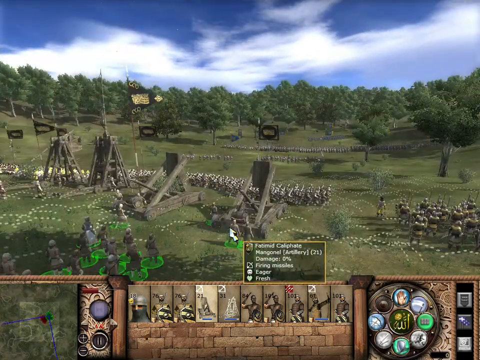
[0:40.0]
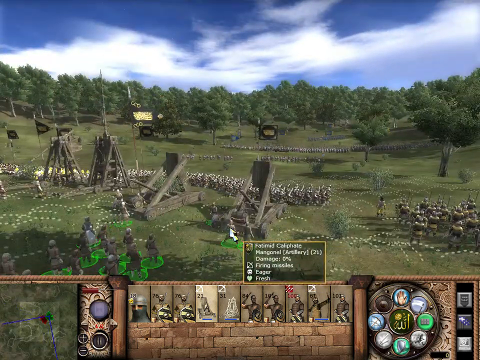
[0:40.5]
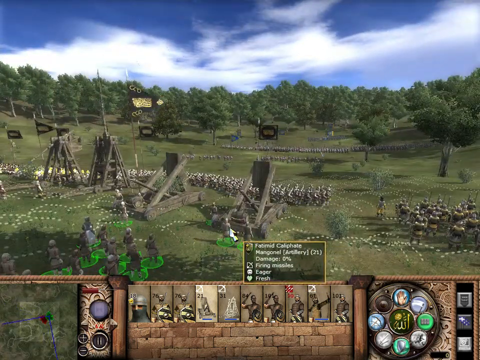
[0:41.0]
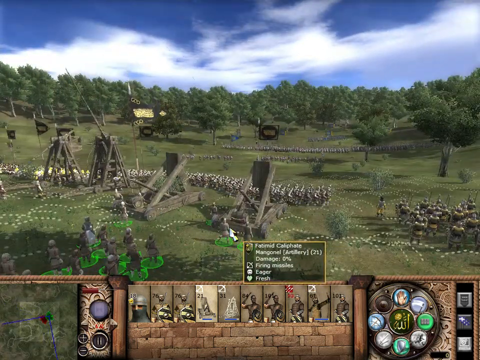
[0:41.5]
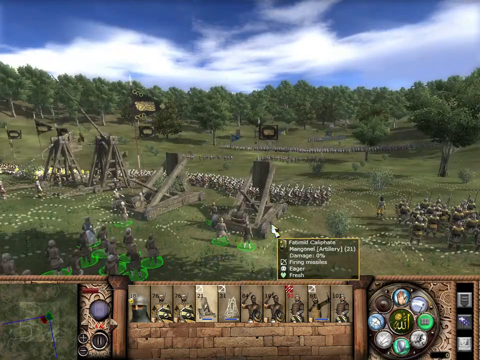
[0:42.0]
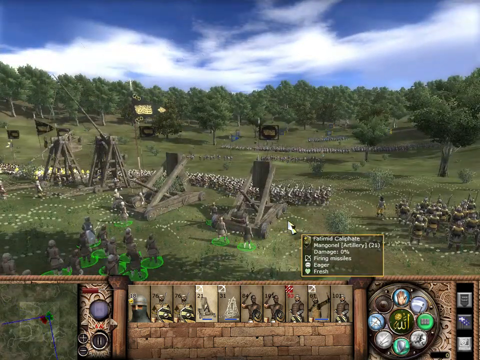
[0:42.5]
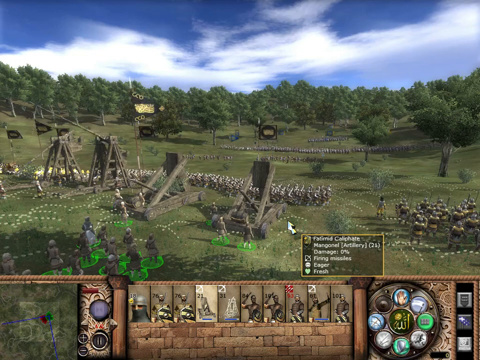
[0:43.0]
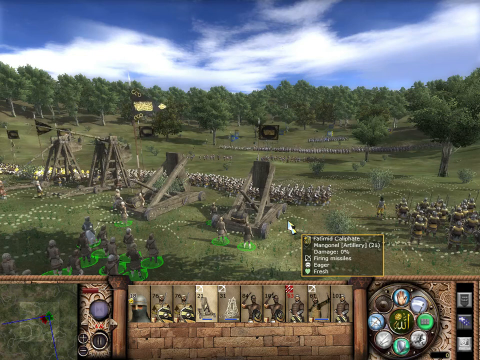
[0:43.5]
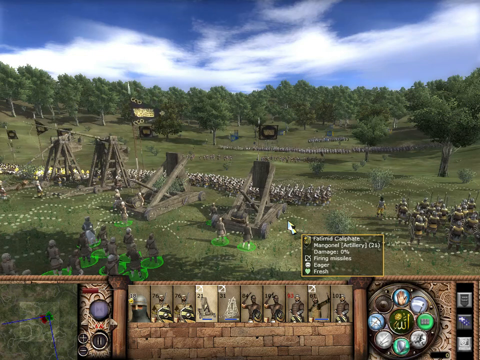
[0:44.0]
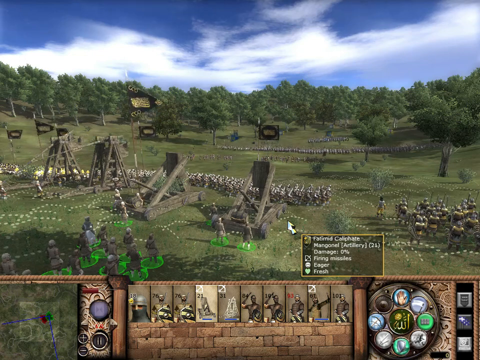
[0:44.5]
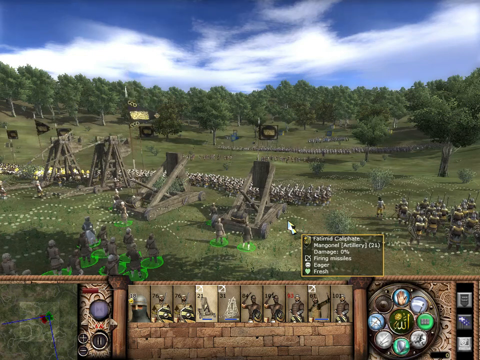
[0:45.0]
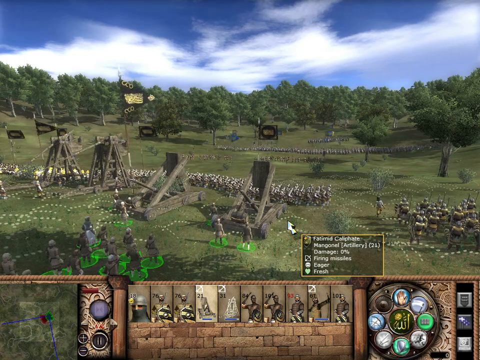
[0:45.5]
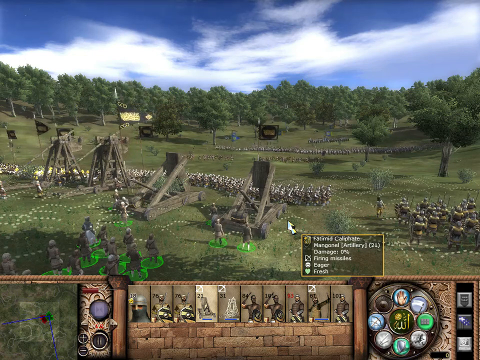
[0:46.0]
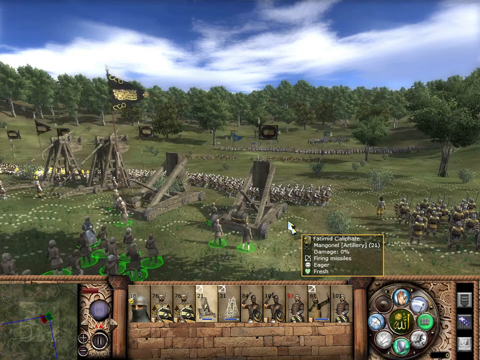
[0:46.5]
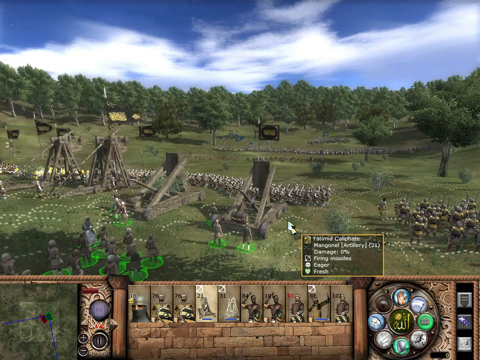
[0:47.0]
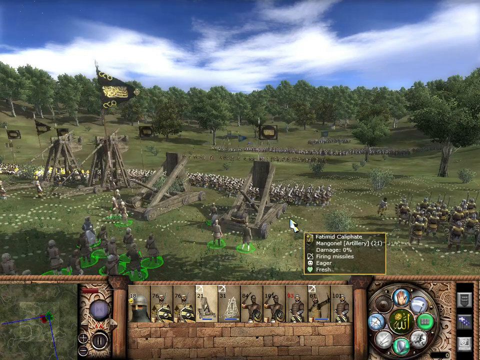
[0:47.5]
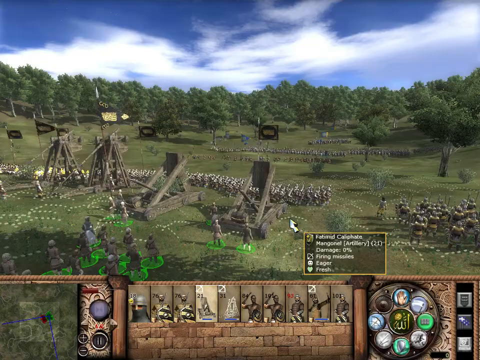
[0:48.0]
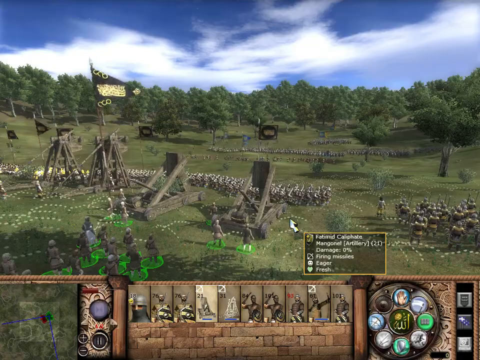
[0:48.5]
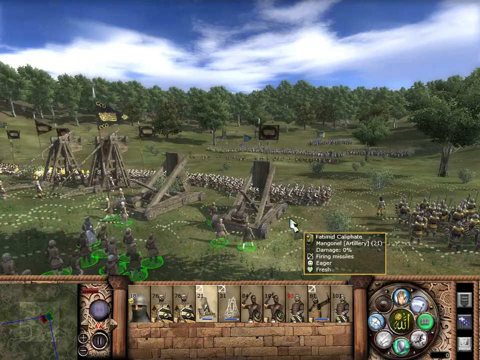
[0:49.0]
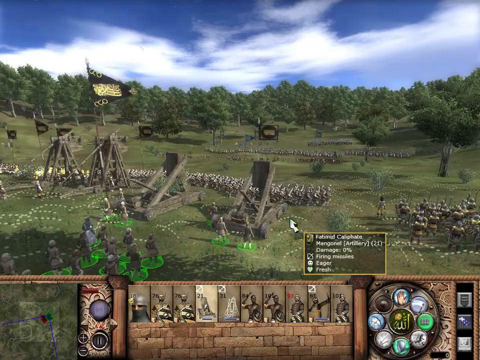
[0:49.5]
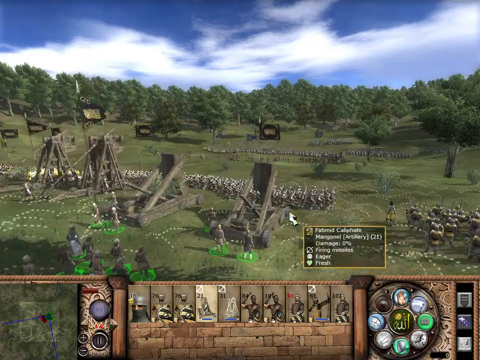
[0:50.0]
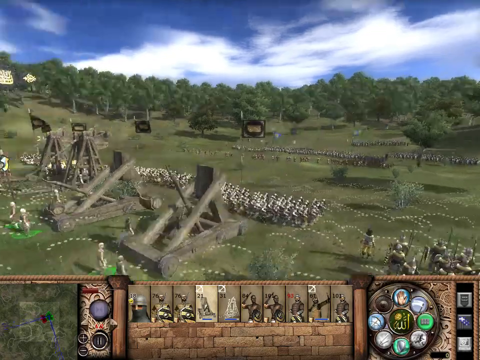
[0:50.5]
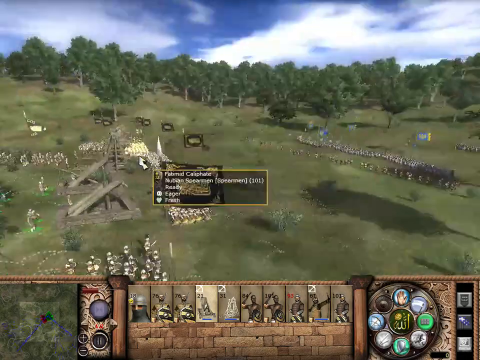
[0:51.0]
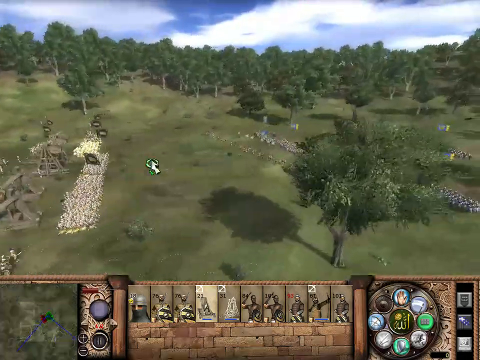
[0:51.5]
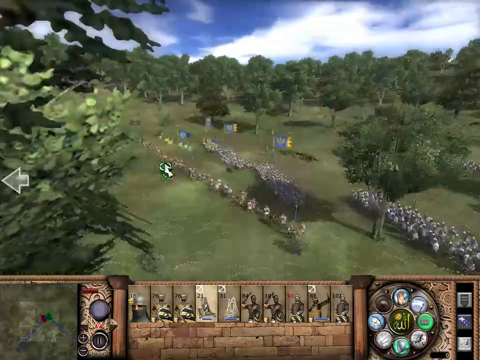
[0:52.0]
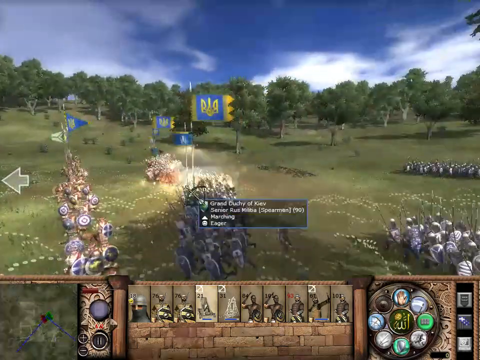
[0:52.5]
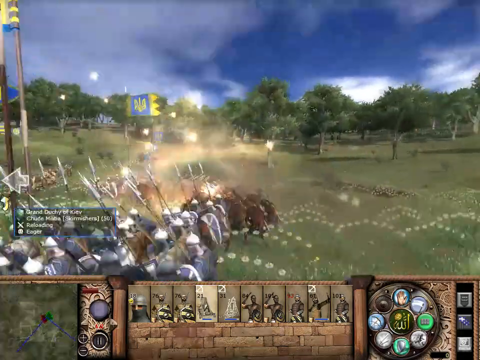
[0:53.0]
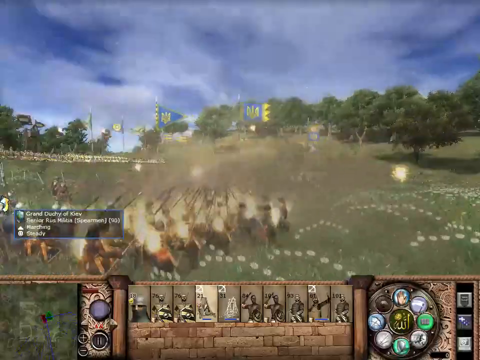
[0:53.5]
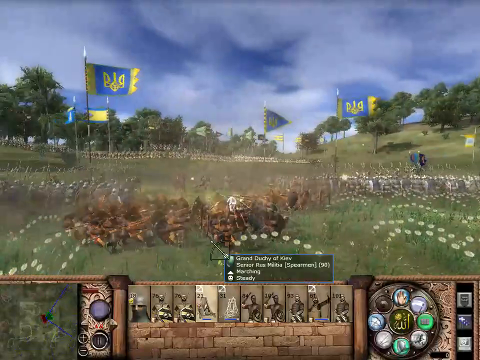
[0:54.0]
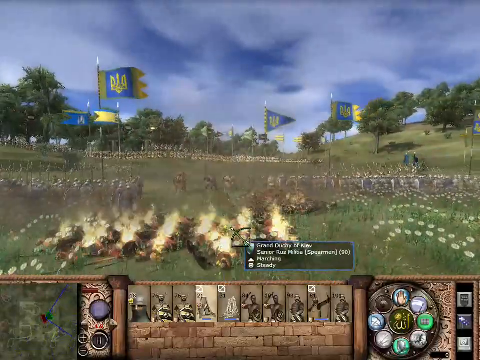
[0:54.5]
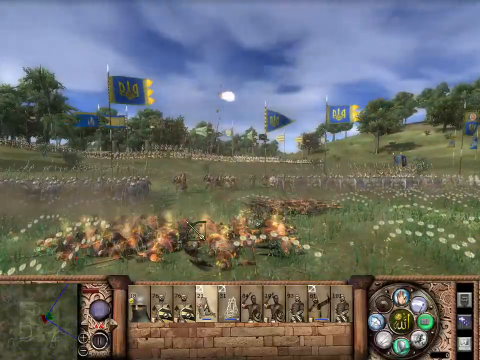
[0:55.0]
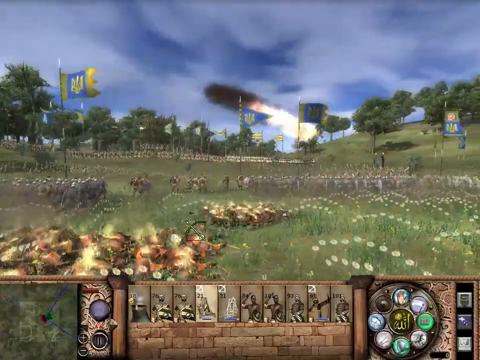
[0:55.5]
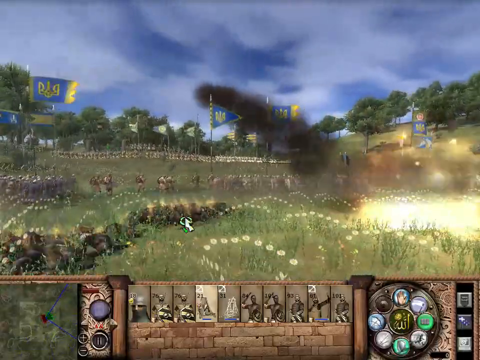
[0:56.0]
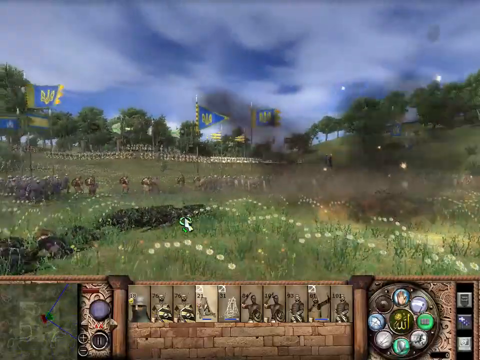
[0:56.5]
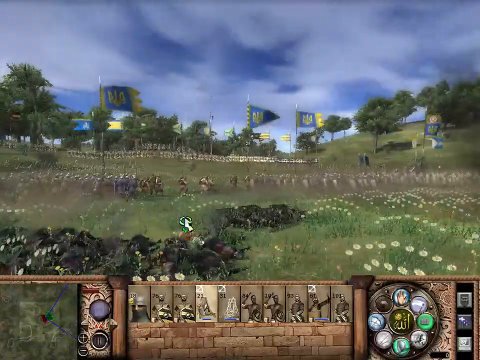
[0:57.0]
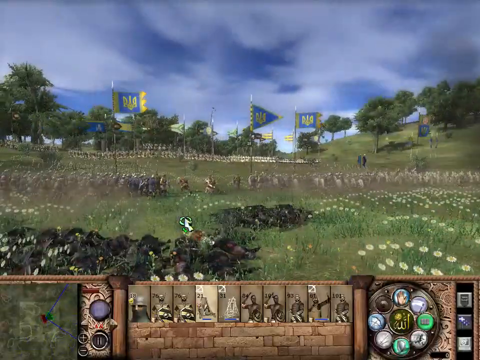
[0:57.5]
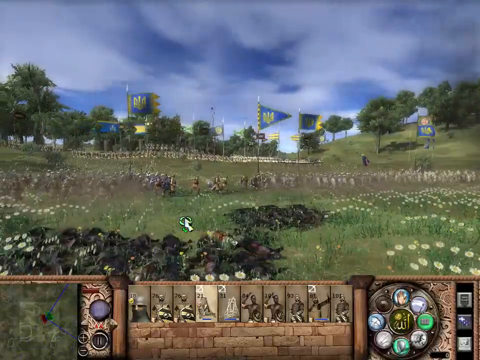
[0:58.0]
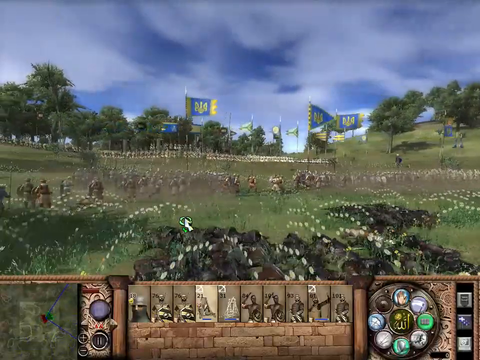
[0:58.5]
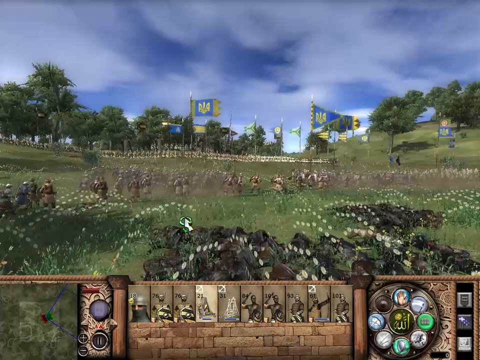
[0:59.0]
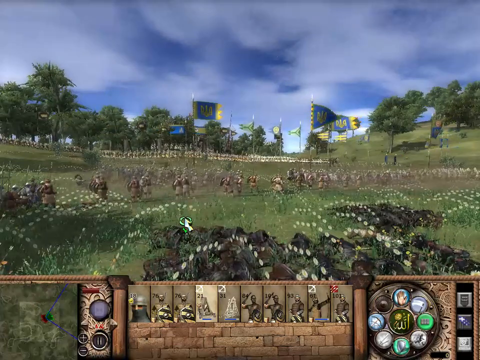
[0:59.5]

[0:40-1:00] The sky is a little more blue now, with some white clouds still in it, and there are about 50-60 trees in the distance. The gold and black flags appear square from what can be seen. Soldiers are on the right side of the screen, and what look like soldiers are on the left side, in front of and behind the wooden artillery mortar machines that fire the shells. A flag goes up and down; it is more of a triangle shape here, while the other side has the square flag, and both are gold and black. Two soldiers walk up to one of the mortar machines, then the camera pans to the other side, where the enemy's flags are blue and yellow. The soldiers there get zapped and all fall down, like smoke. A mortar lands, and some soldiers from the blue and gold side move in and gather, possibly getting ready to make their move in this war game.